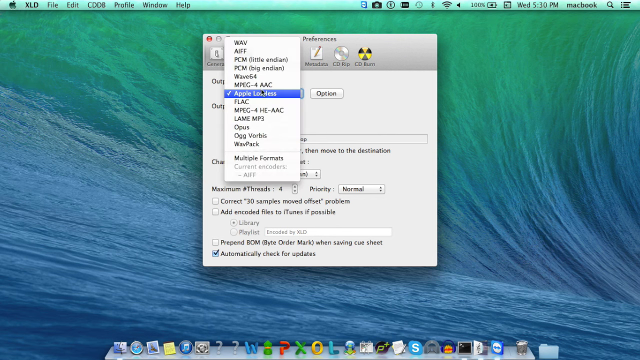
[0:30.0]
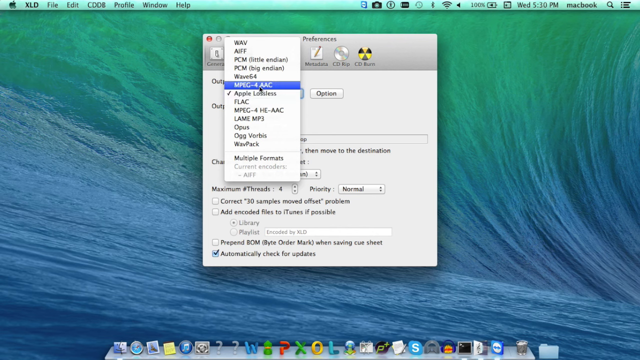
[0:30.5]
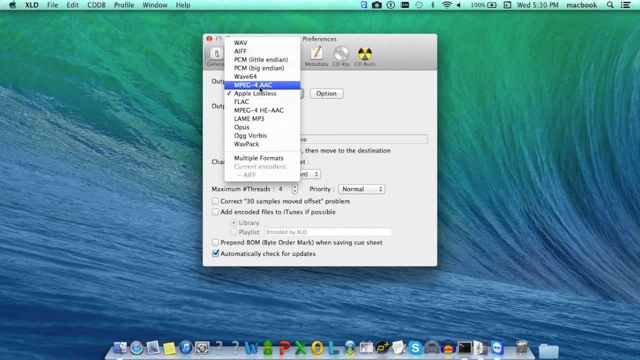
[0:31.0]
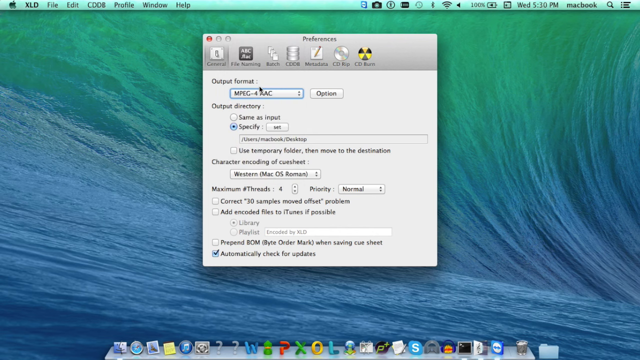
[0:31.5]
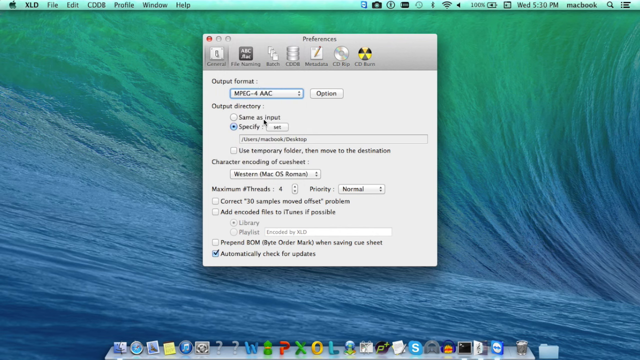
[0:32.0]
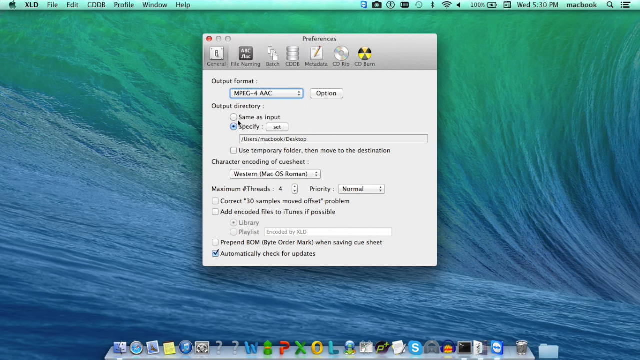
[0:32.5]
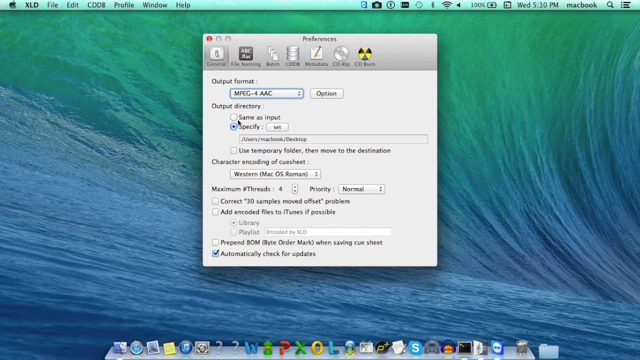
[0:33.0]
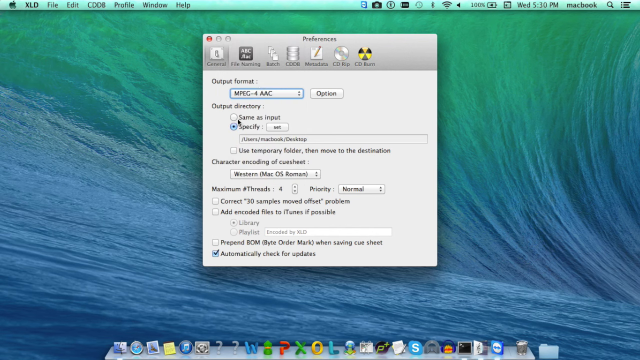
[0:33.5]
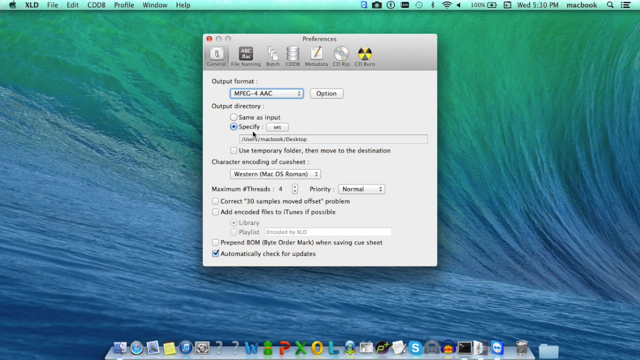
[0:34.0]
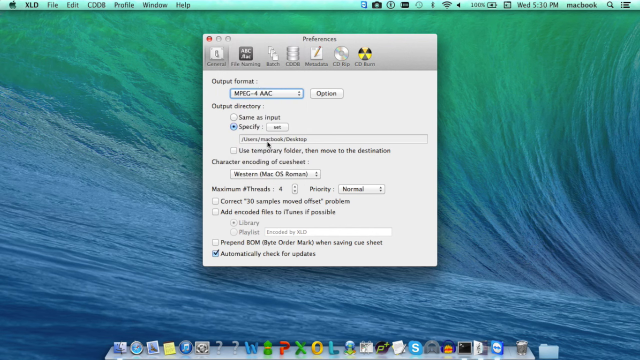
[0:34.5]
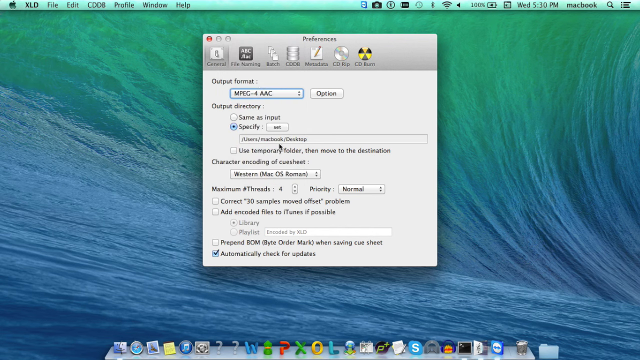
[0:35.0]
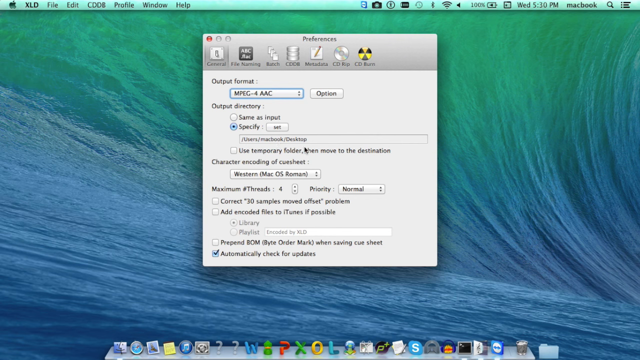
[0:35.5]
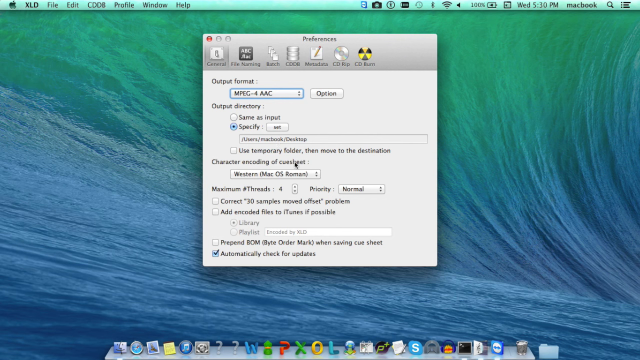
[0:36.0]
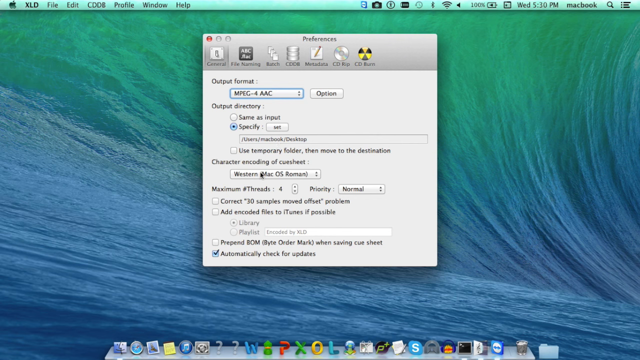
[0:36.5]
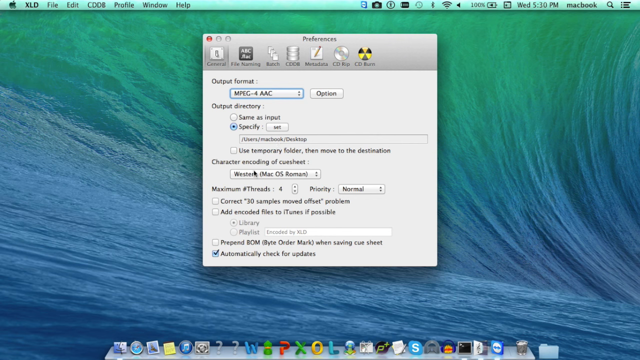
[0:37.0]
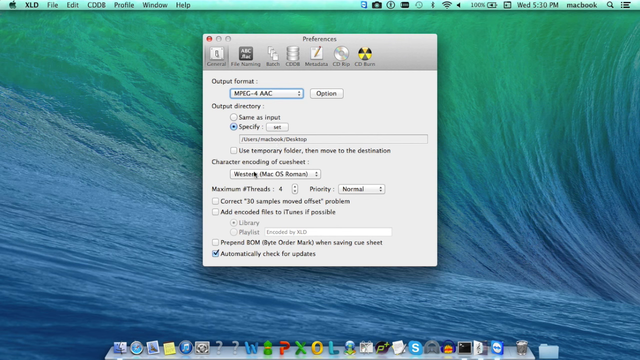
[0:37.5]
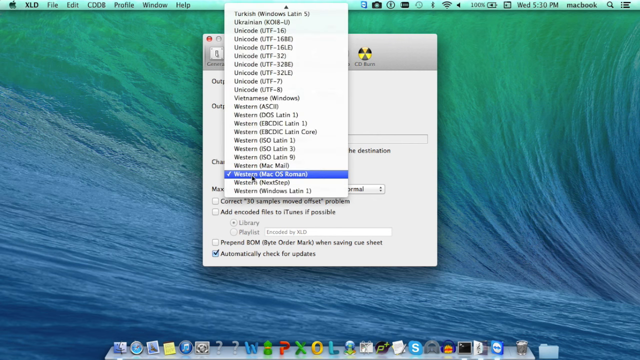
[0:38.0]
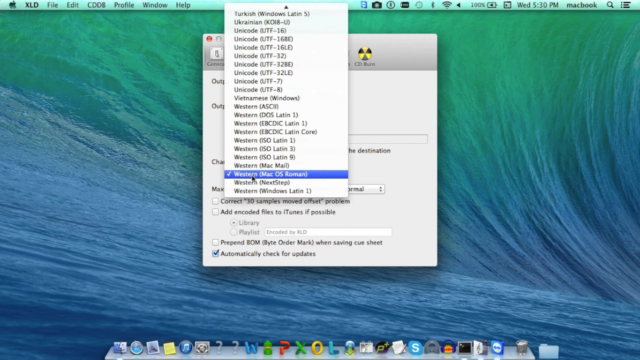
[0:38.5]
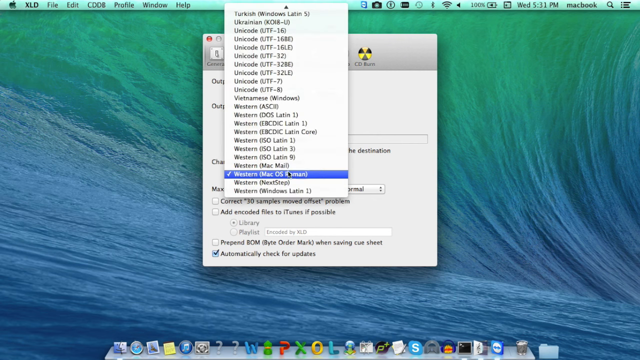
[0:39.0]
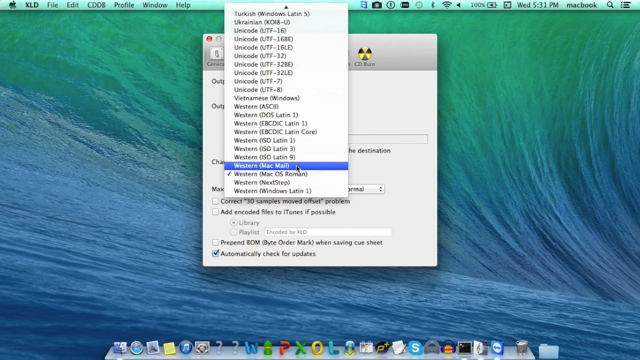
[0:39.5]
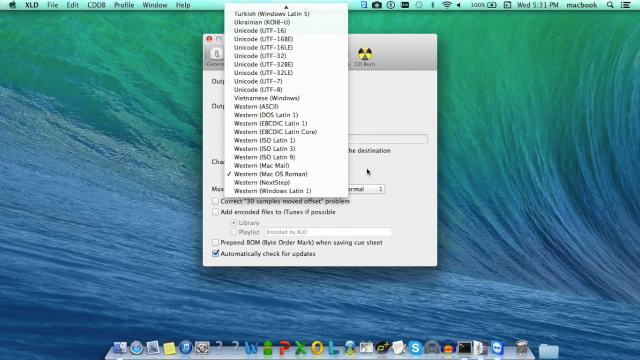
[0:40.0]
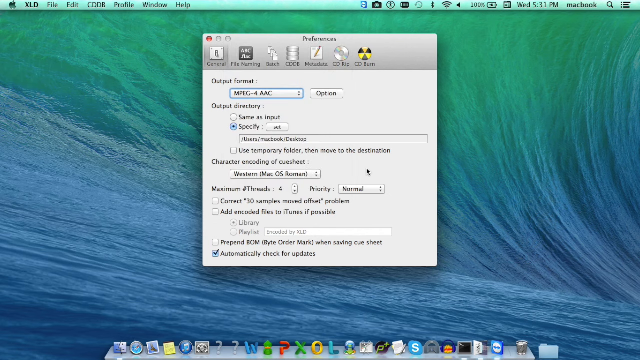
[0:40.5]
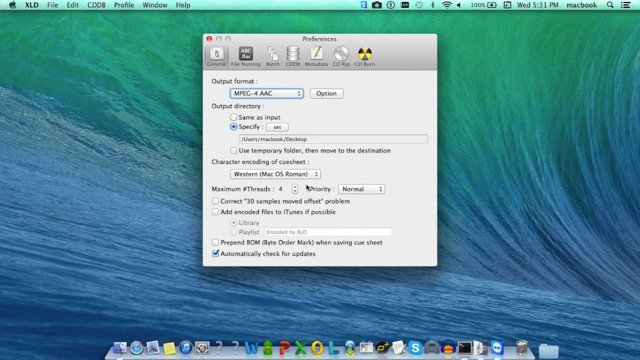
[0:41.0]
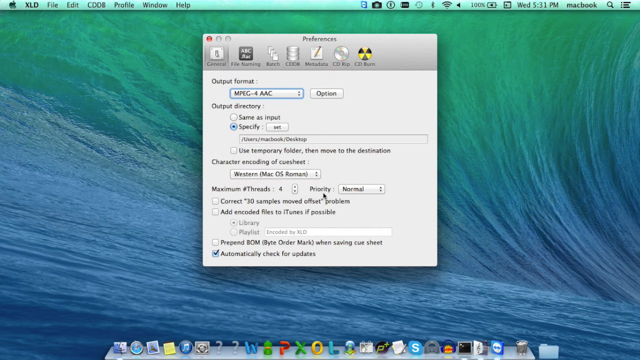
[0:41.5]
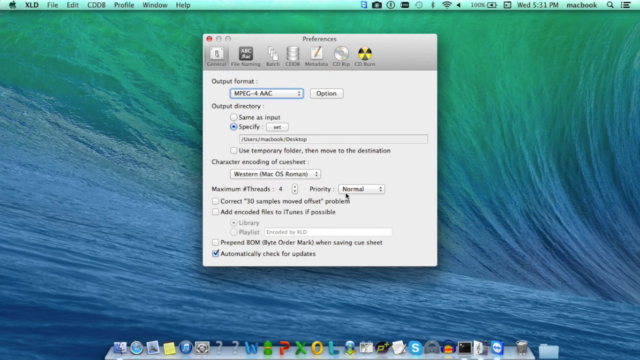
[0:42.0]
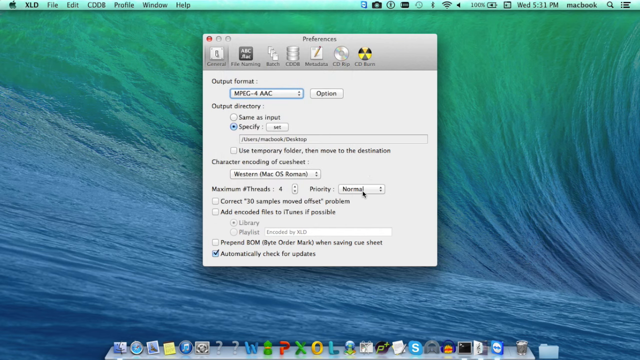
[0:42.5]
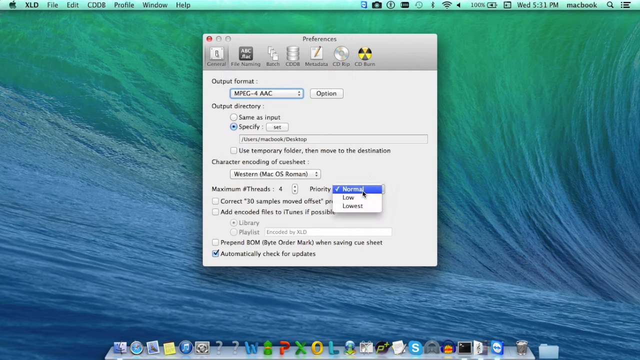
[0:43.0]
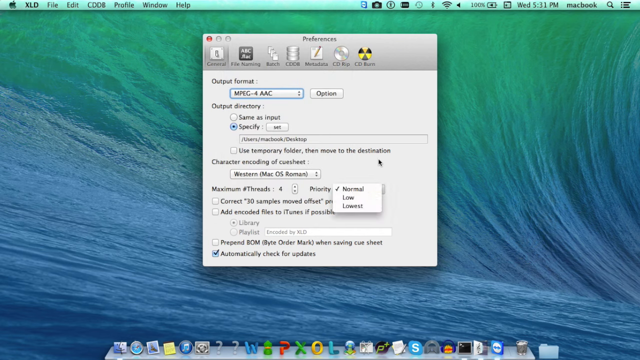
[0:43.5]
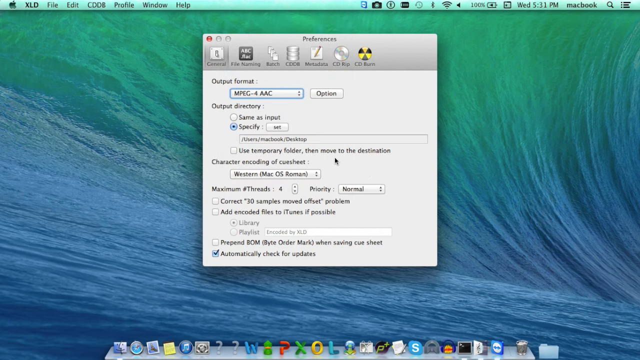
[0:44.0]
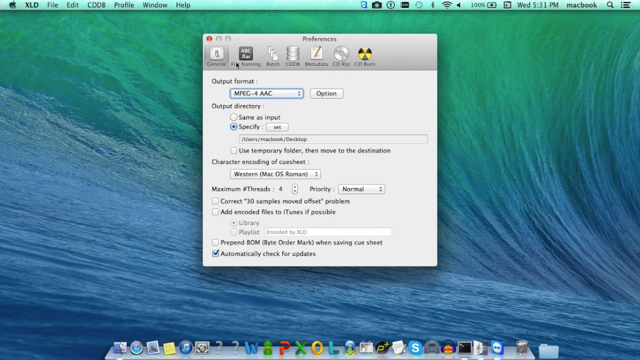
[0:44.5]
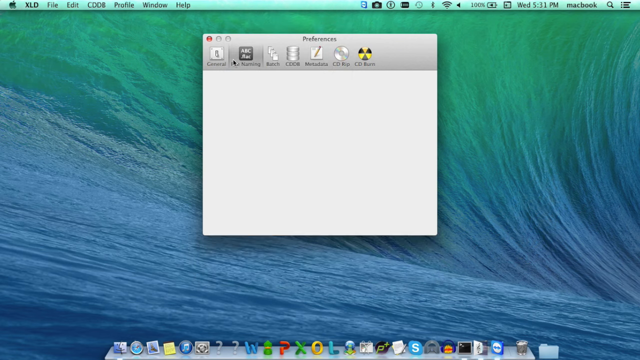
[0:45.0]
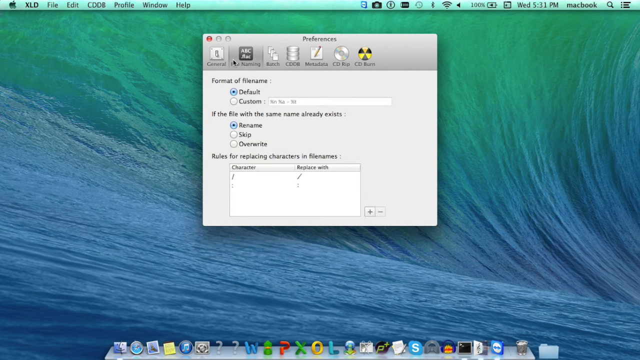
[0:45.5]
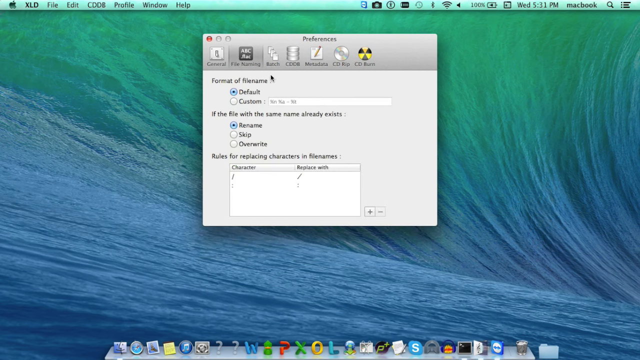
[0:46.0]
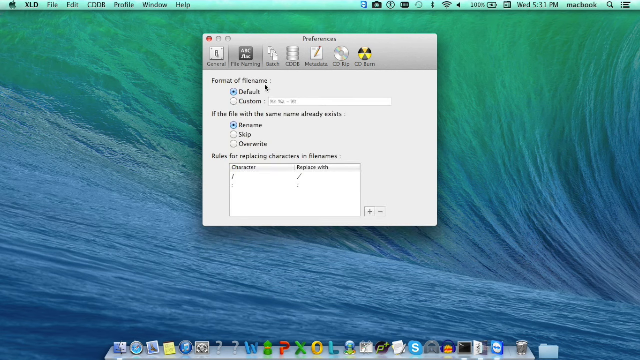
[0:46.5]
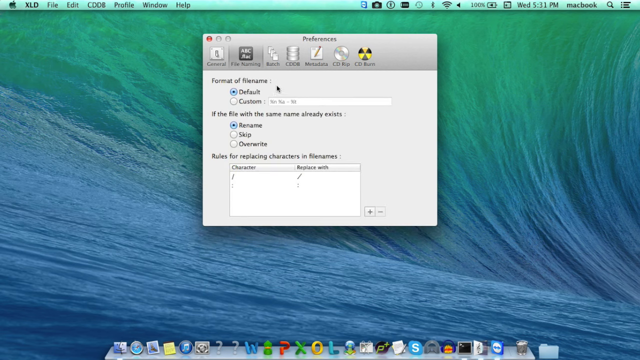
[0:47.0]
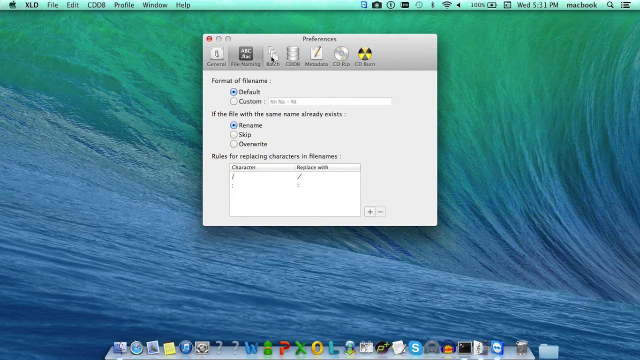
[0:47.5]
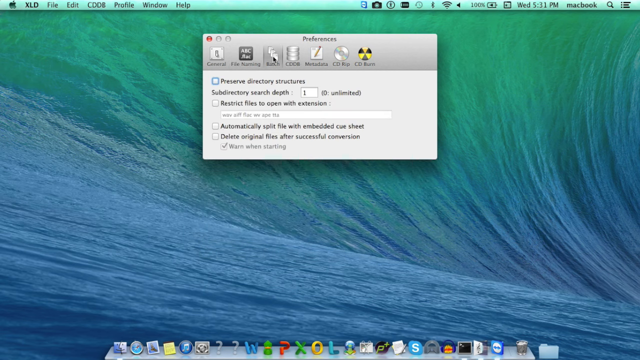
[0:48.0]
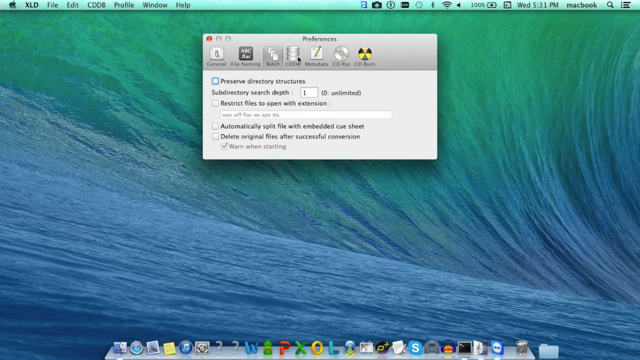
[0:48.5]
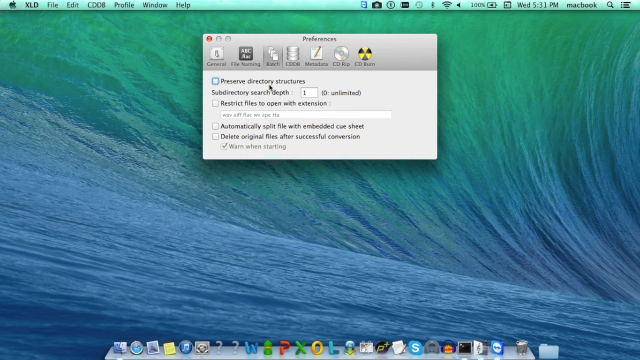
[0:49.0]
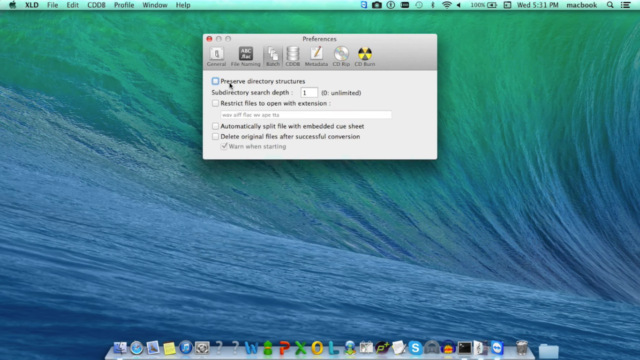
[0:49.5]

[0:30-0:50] The preferences screen on the Mac is open, and a selection appears to be made, possibly of the Mac version. Another selection is made within preferences, possibly an audio type. More selections follow, seemingly adjusting the priority and something else, apparently the audio type to work with. The writing is quite small and difficult to read. The shot ends on the Mac screen with preferences still open.